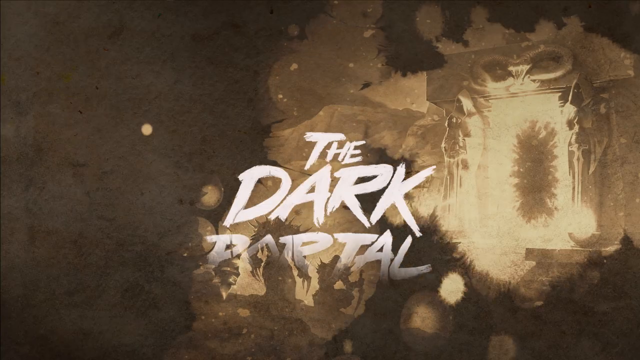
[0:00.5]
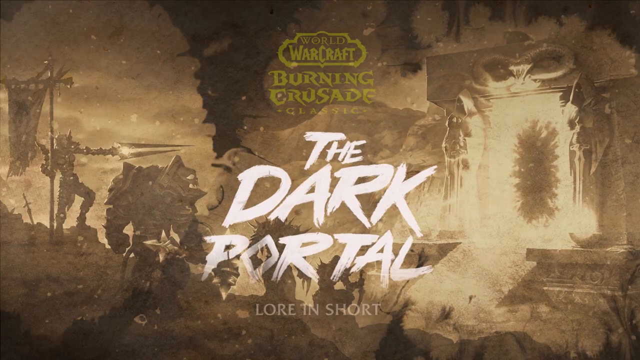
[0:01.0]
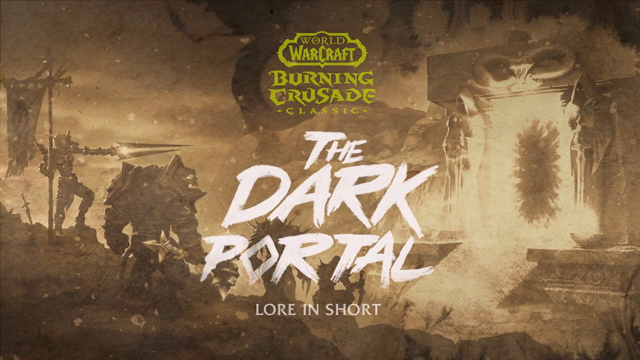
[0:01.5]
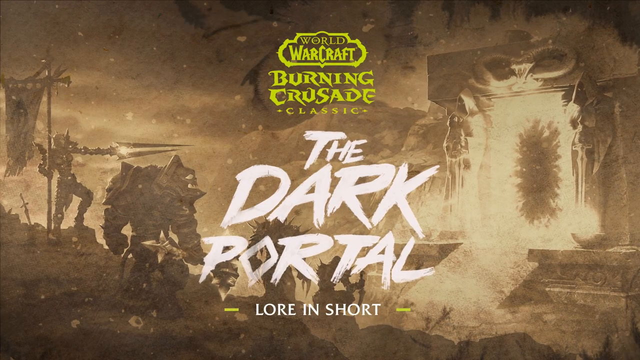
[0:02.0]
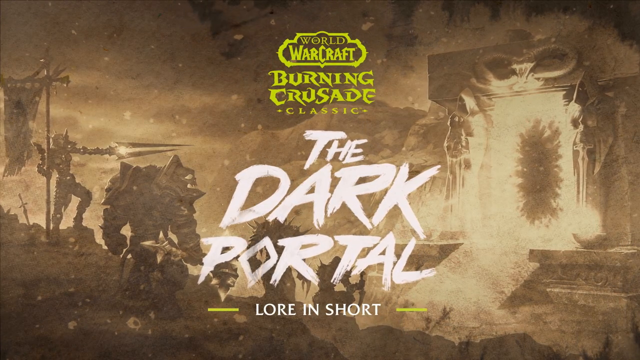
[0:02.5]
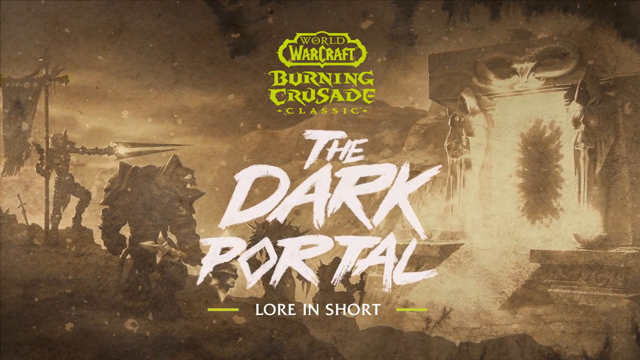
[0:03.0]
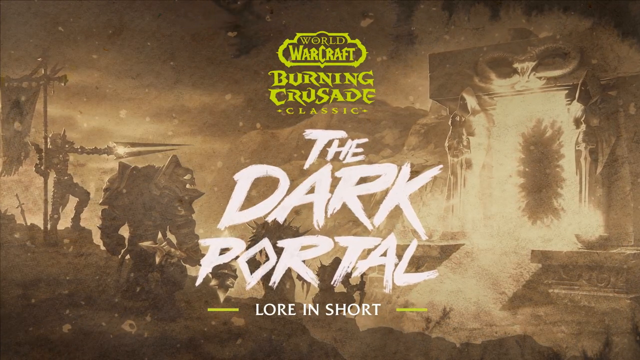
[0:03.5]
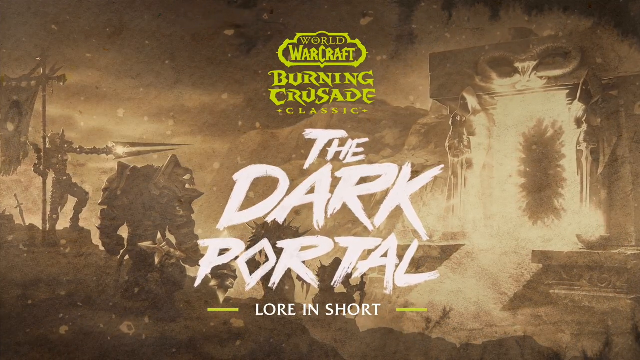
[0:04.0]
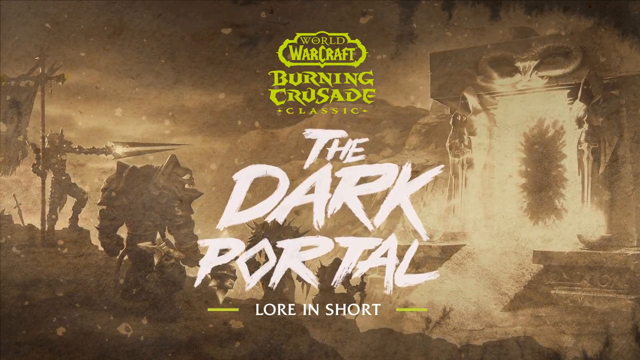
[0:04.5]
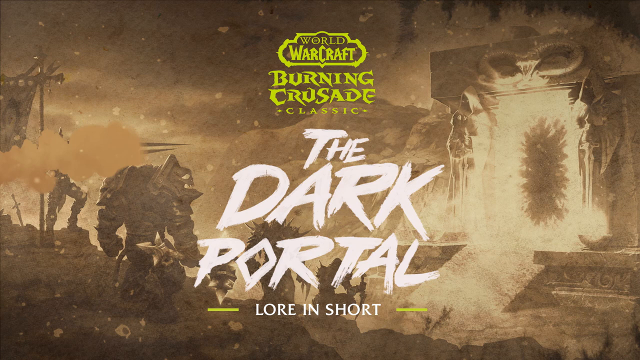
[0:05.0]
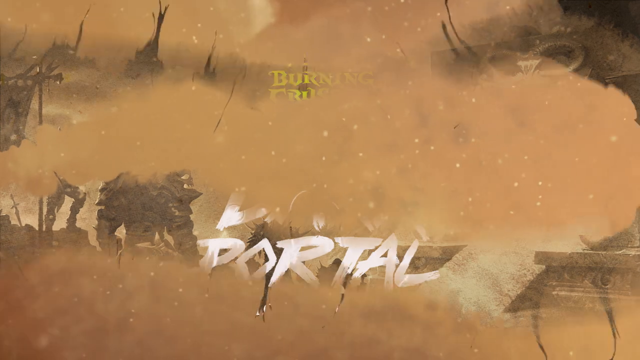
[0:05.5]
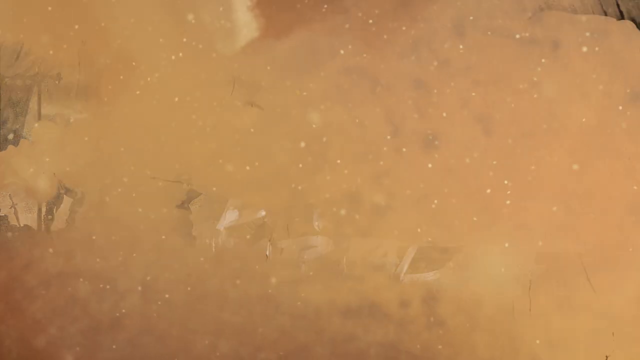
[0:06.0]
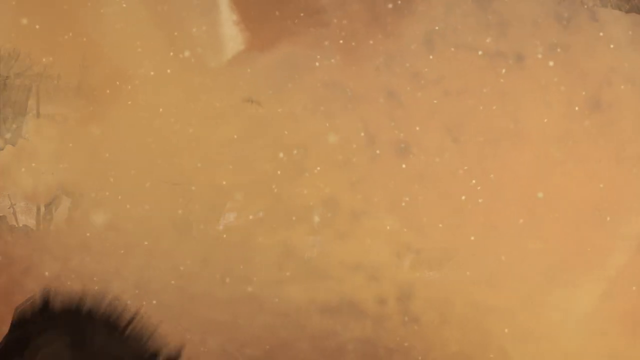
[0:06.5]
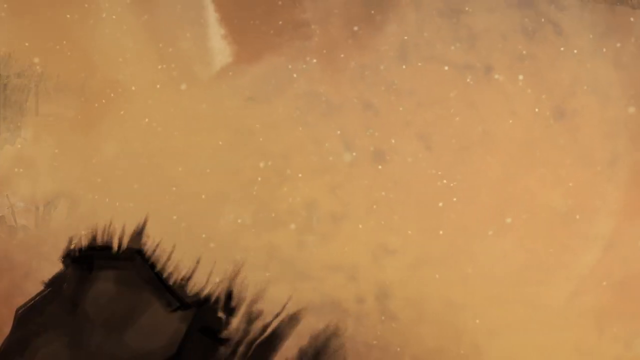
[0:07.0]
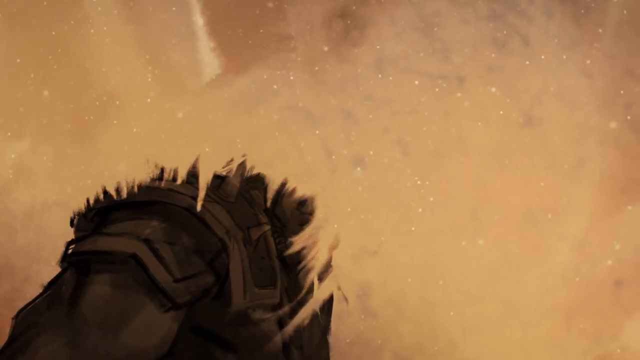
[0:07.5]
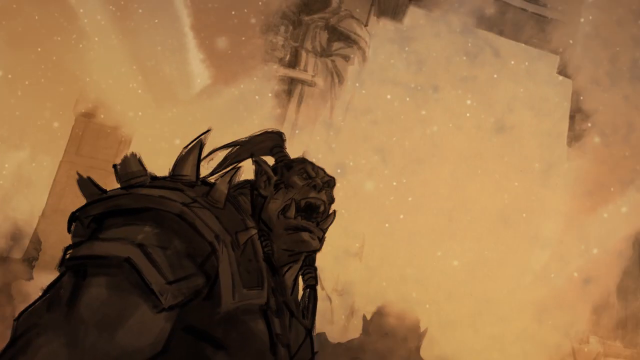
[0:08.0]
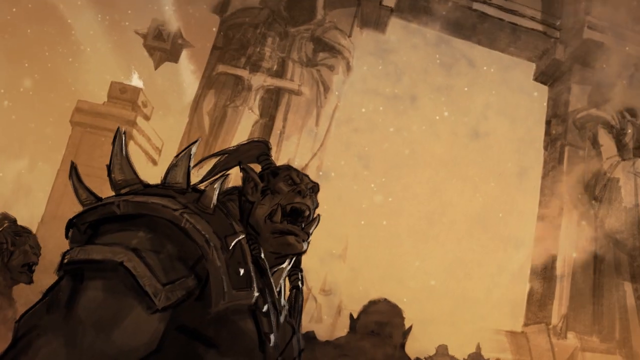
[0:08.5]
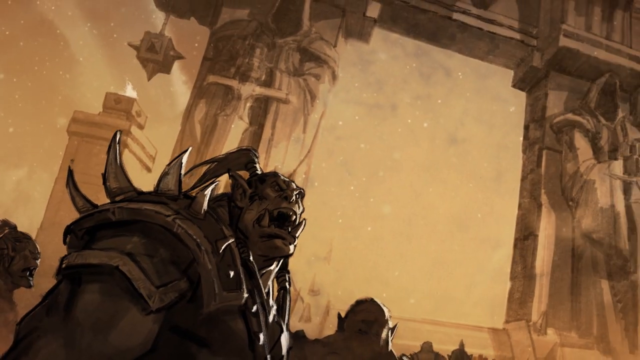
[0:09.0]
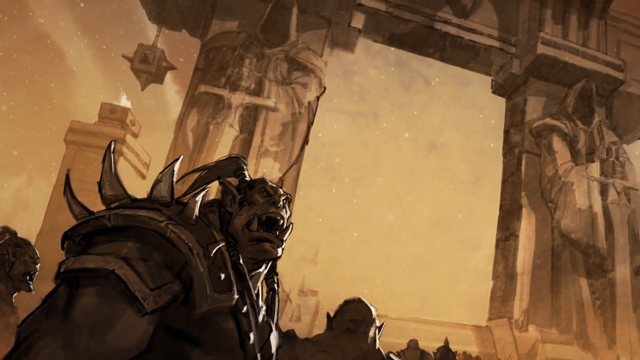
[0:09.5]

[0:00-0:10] The video appears to be an advertisement or a video about the lore of World of Warcraft, The Burning Crusade, Classic, The Dark Portal. It opens with something like ink being splotted onto a page, gradually revealing a picture. On the right side of the screen is a portal with a bright light in it, flanked by two statues in hoods and cloaks, each holding a sword with both hands, the swords pointing down. On the left side of the screen are several characters of different sizes, shapes, classes and races, kind of standing and looking at the portal as if they are going into it. The image lingers, then a sand-like effect washes over the picture, and a close-up shows the portal and what looks to be a character, apparently an orc.